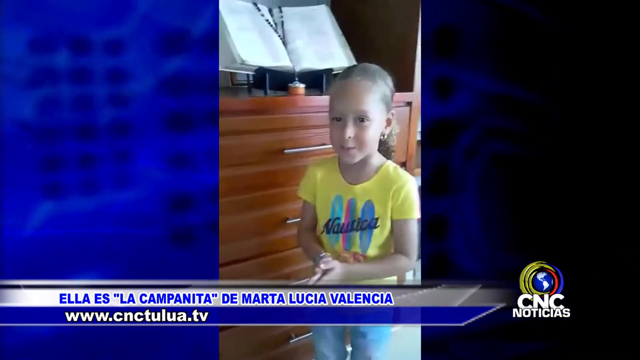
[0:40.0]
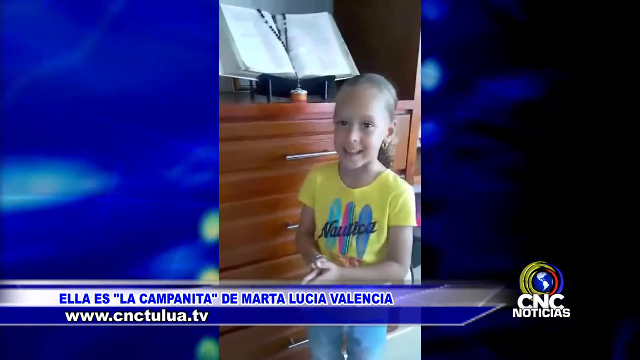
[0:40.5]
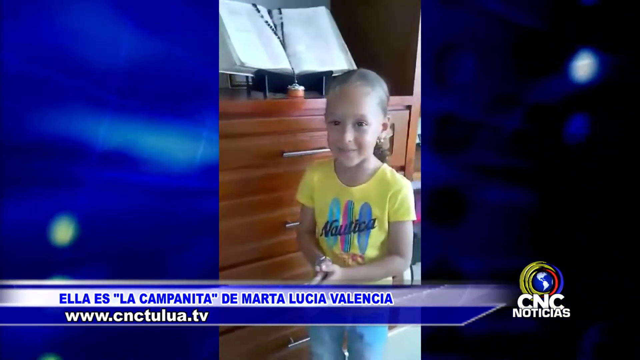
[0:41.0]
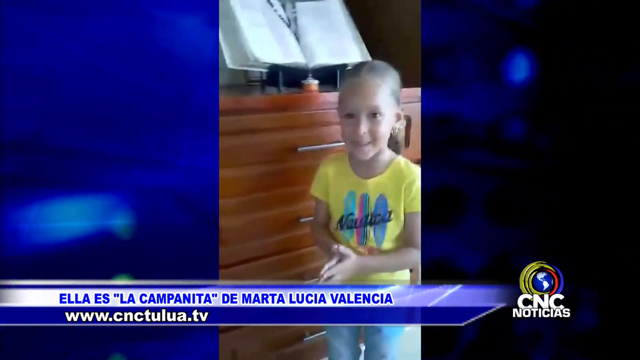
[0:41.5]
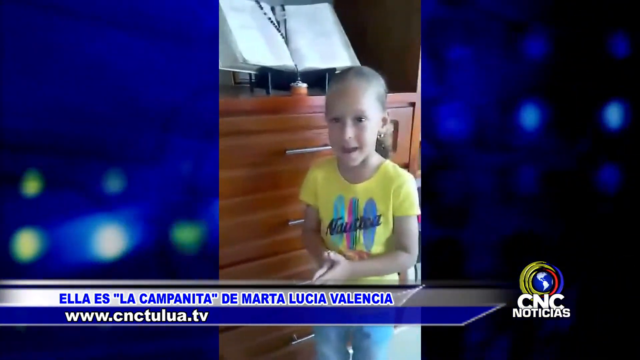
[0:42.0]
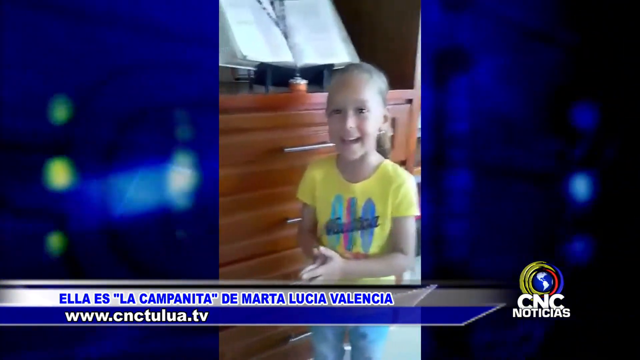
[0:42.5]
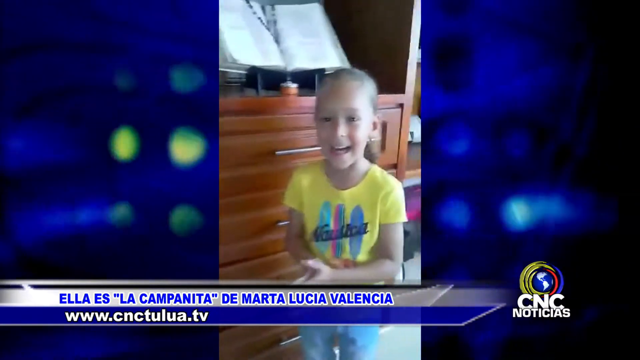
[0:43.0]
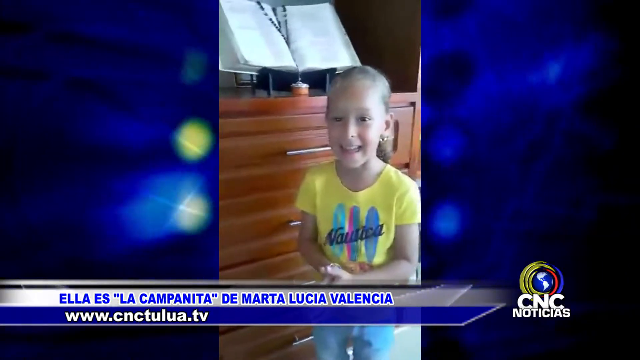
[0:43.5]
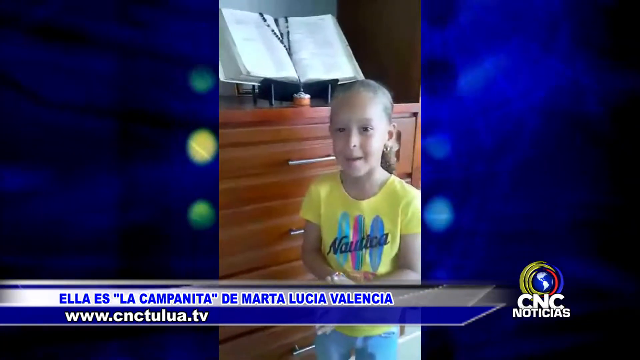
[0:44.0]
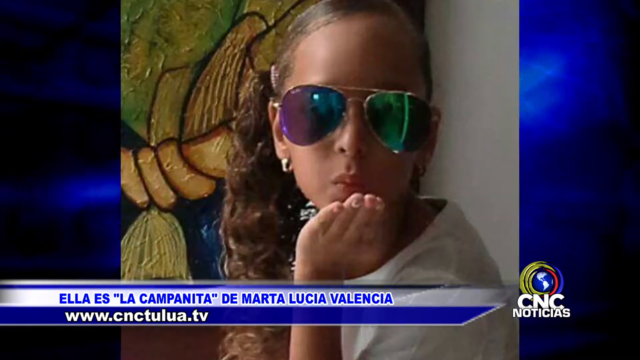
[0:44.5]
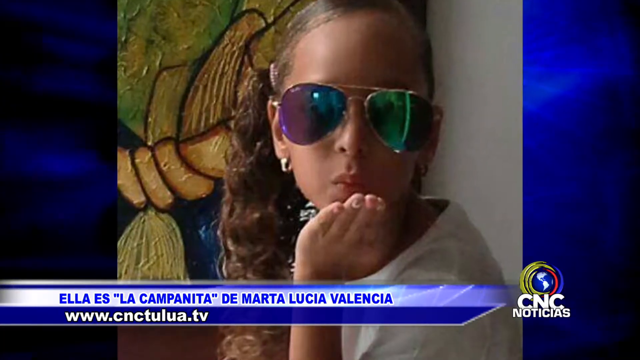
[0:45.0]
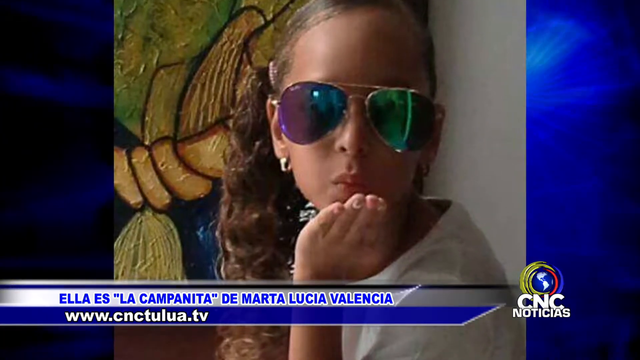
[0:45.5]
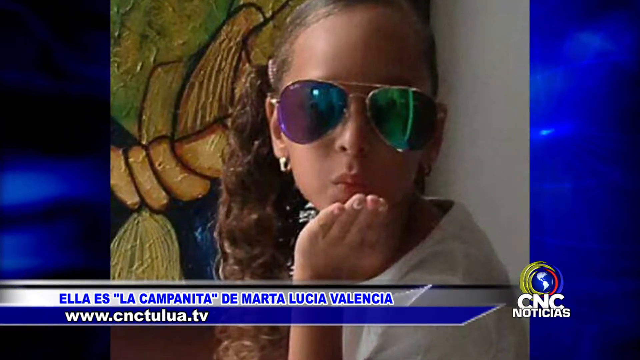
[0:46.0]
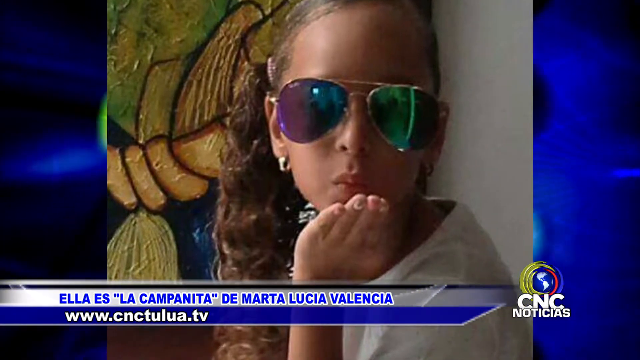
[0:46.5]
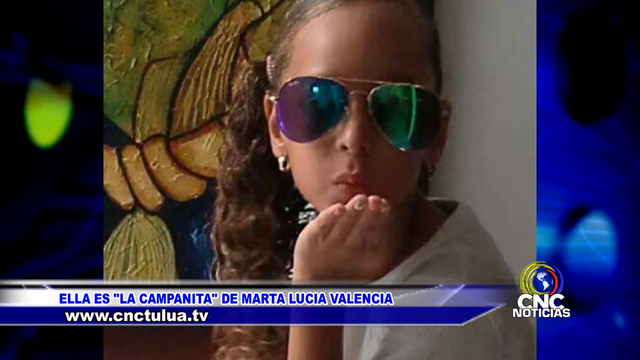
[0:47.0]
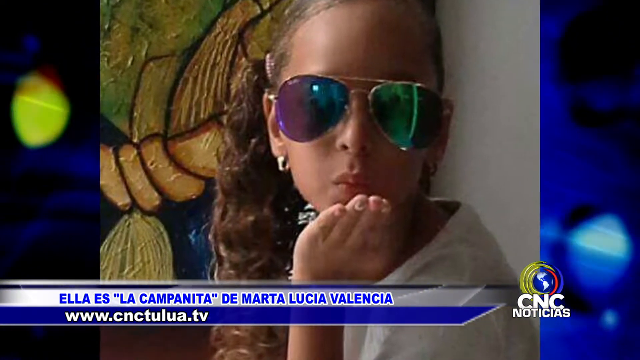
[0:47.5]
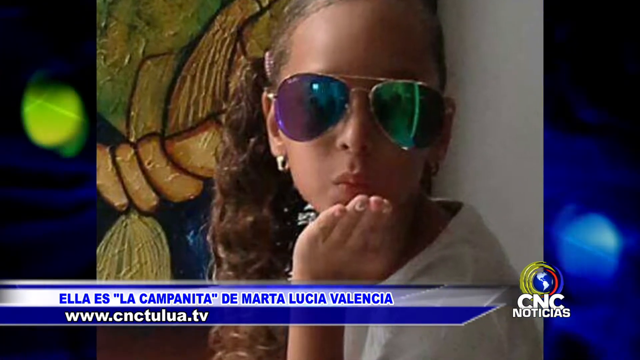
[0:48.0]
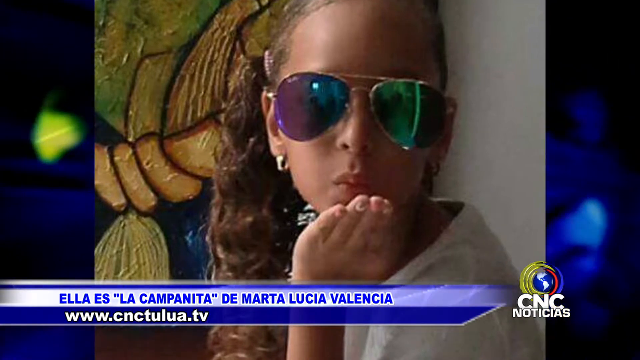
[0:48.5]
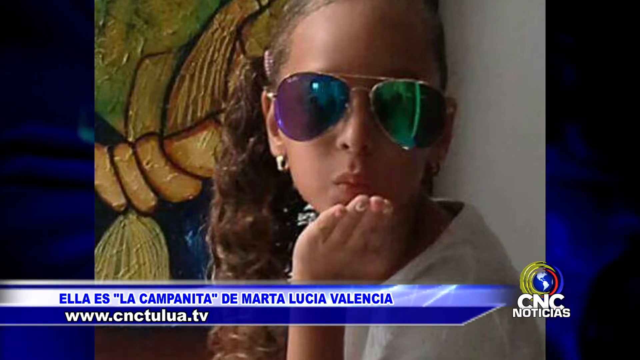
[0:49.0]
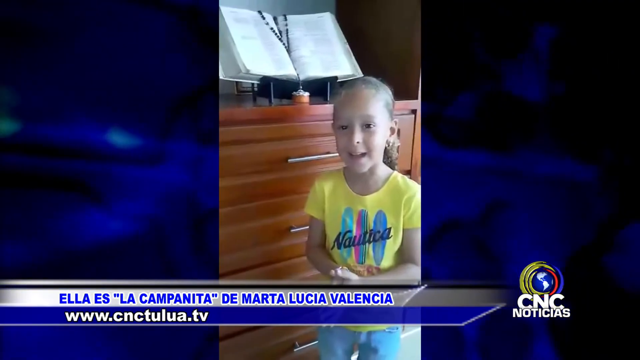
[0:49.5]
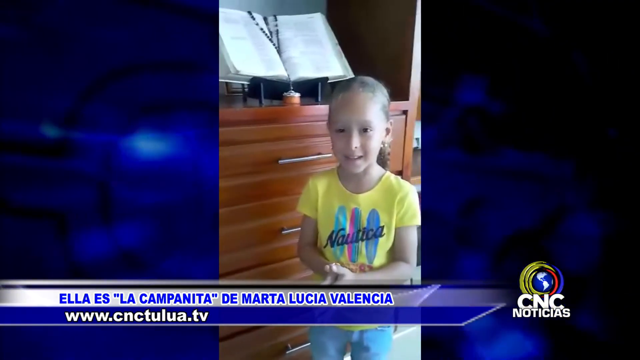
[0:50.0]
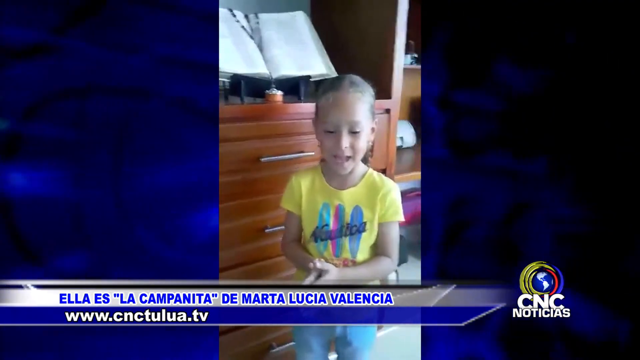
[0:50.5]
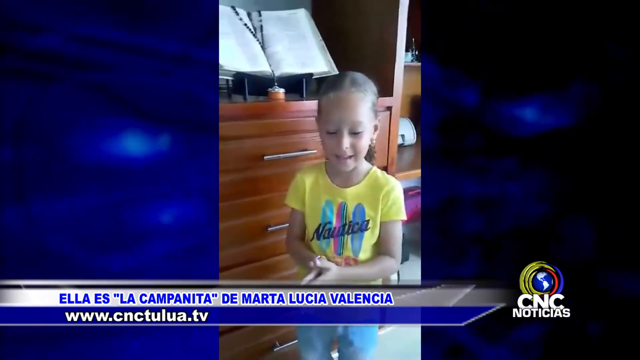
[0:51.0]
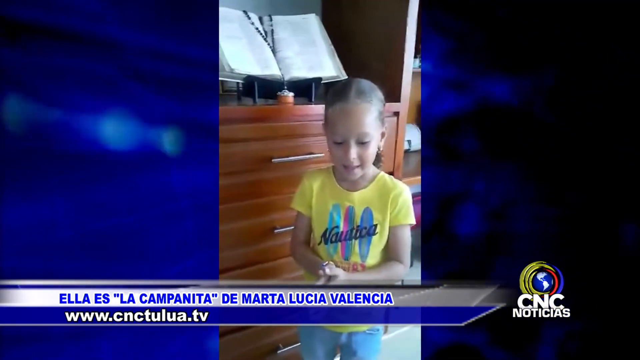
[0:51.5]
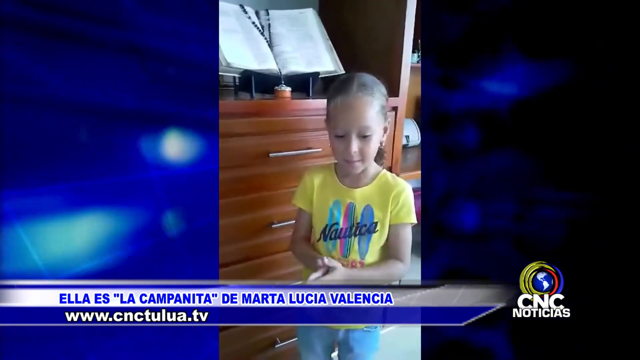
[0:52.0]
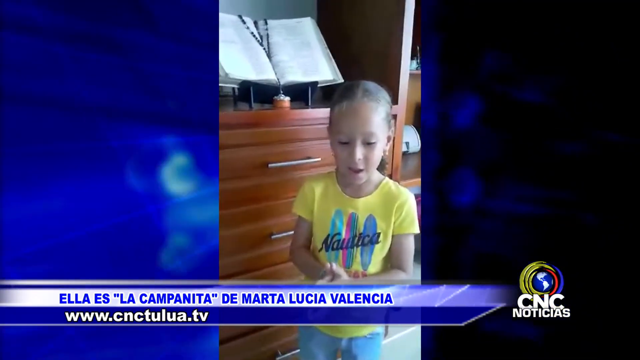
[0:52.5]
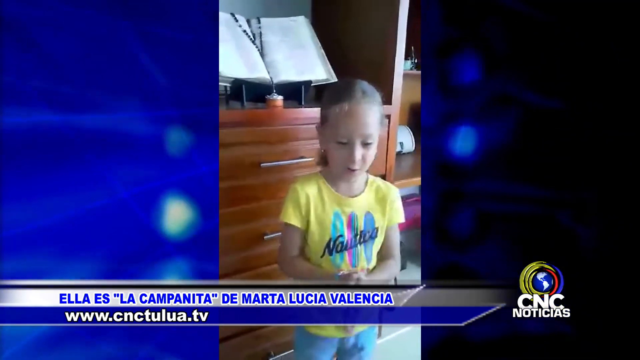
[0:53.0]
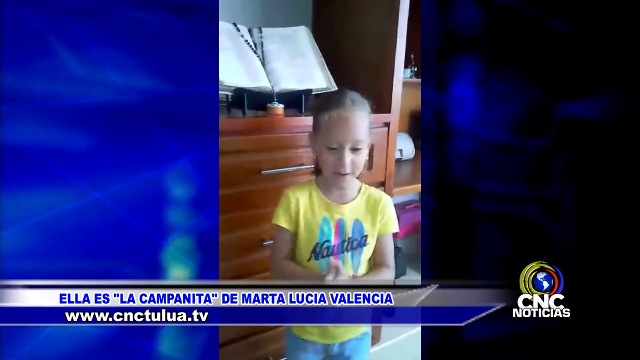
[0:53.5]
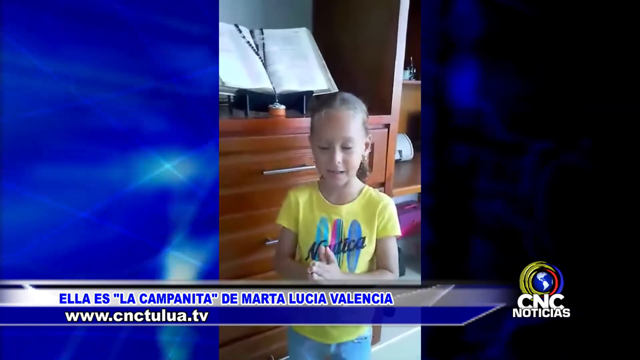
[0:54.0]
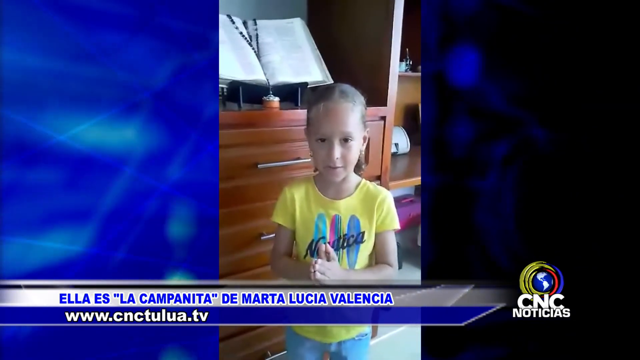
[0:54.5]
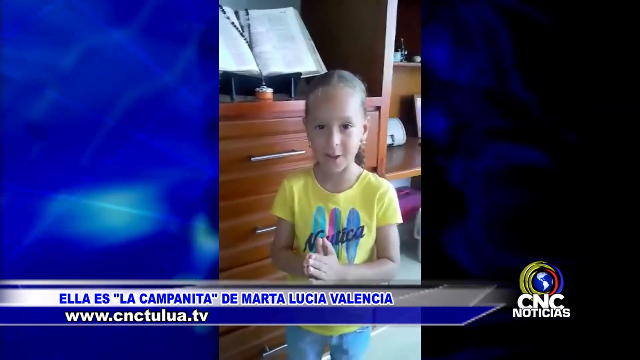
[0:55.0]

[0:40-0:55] A little girl in a yellow T-shirt with some vertical blue paint marks on it stands beside a chest of drawers with an open book on top. Her hands are clasped together with her palms facing each other, hands slightly outwards and elbows bent. She speaks and smiles as she speaks, and she is seen from the head to the waist. Next, an image shows her posing in aviator-style sunglasses and blowing a kiss, with a colourful motif to her left side. The camera pans closer, and then she is seen standing and talking again beside the chest of drawers, looking quite happy as she speaks with both hands clasped together. On top of the chest of drawers, beside the girl, a book opened to the middle is positioned on a book stand.